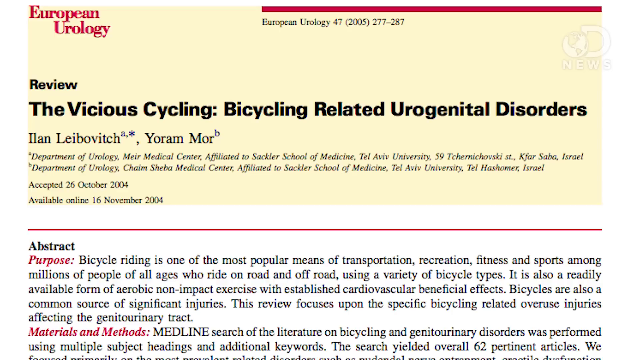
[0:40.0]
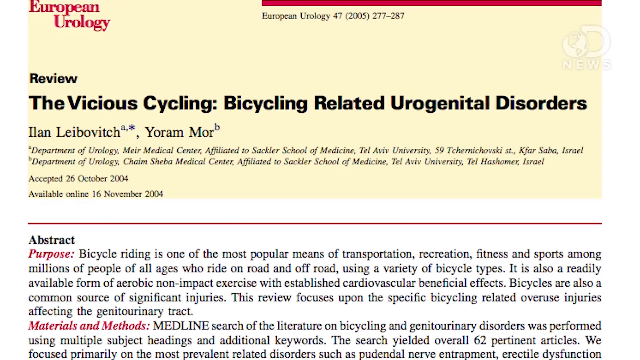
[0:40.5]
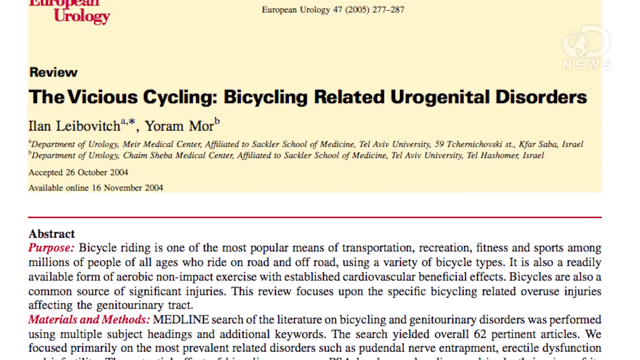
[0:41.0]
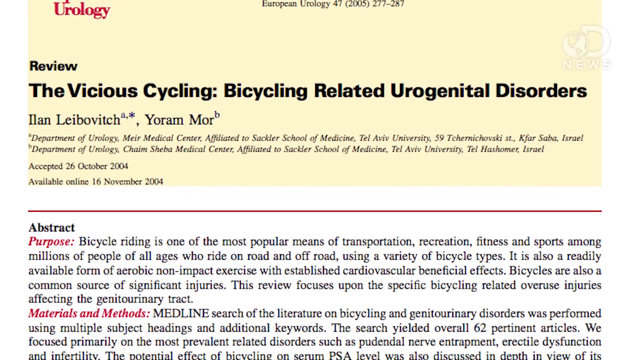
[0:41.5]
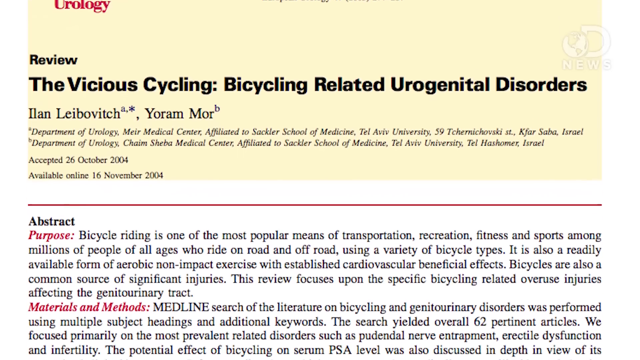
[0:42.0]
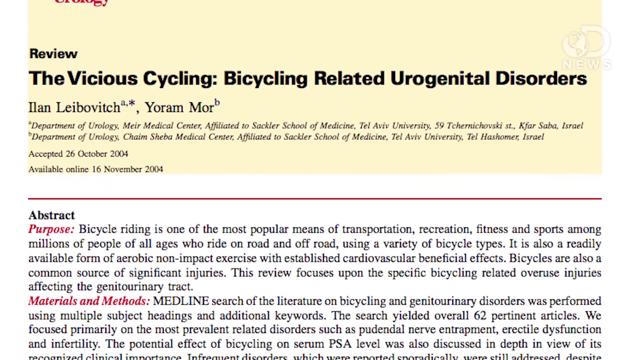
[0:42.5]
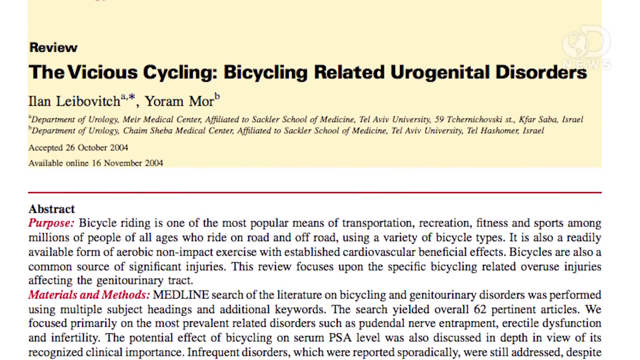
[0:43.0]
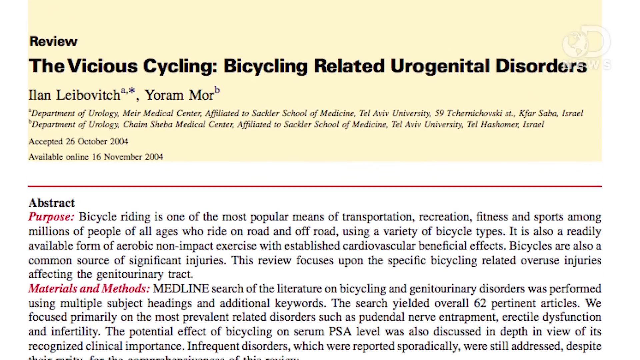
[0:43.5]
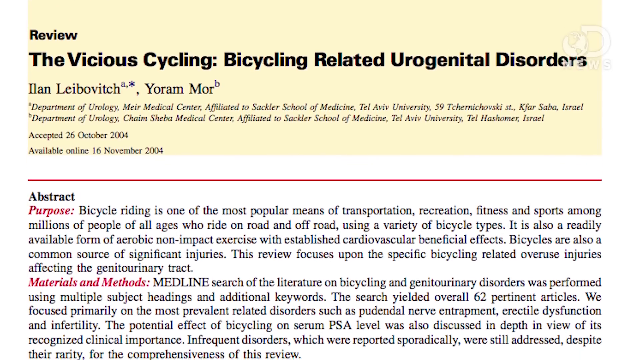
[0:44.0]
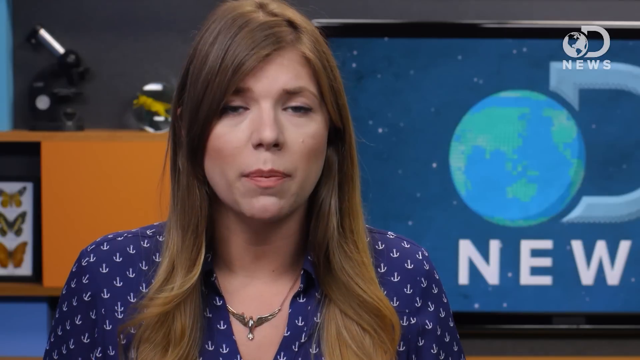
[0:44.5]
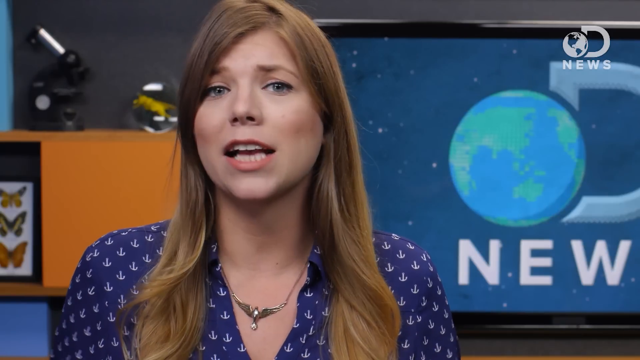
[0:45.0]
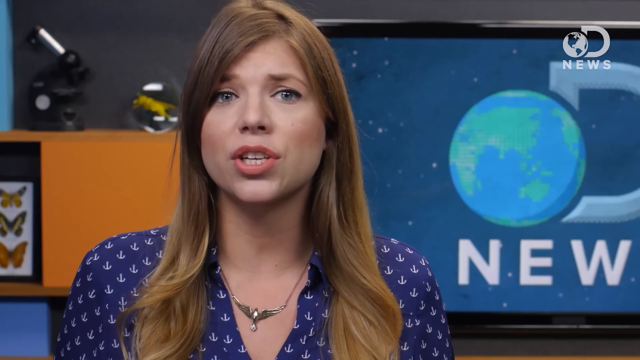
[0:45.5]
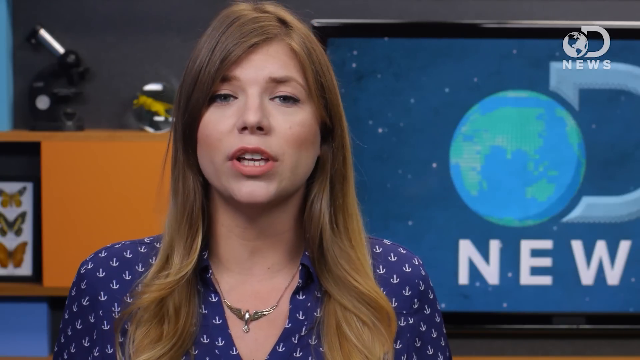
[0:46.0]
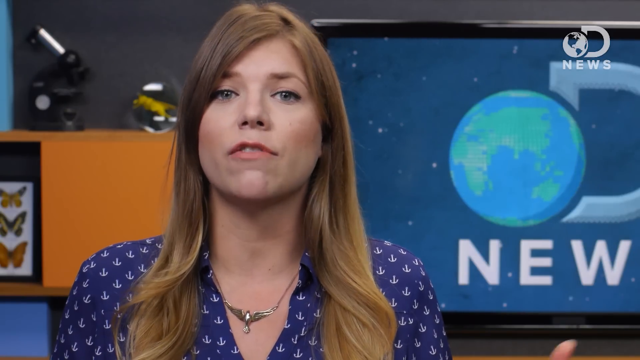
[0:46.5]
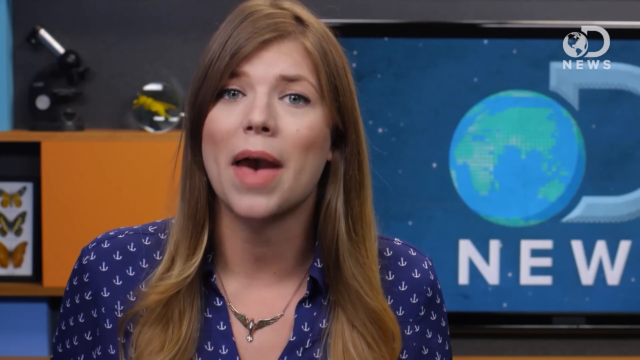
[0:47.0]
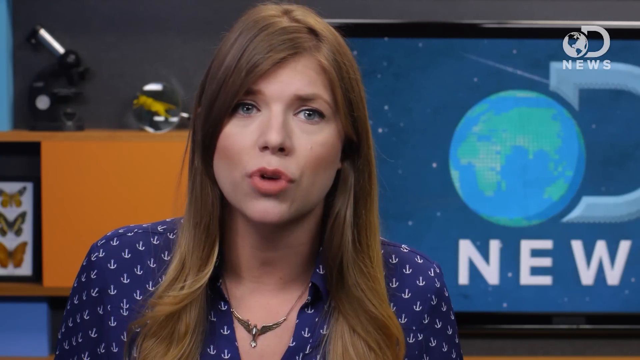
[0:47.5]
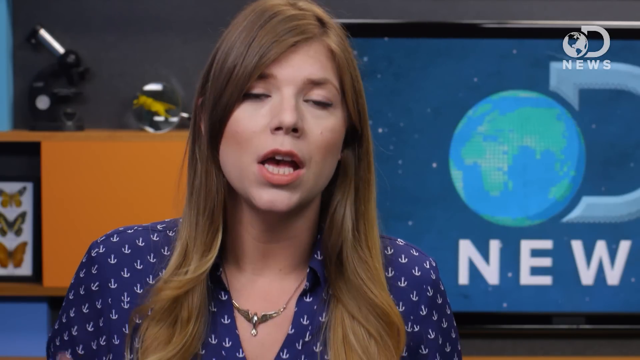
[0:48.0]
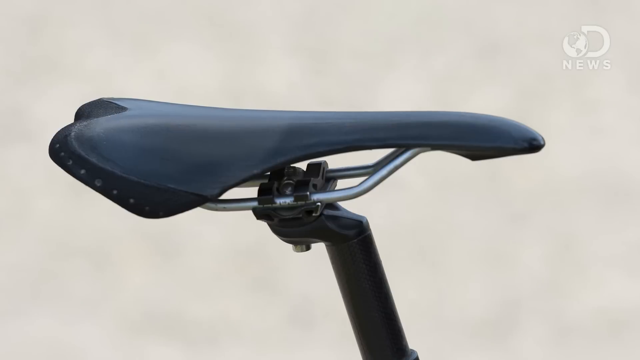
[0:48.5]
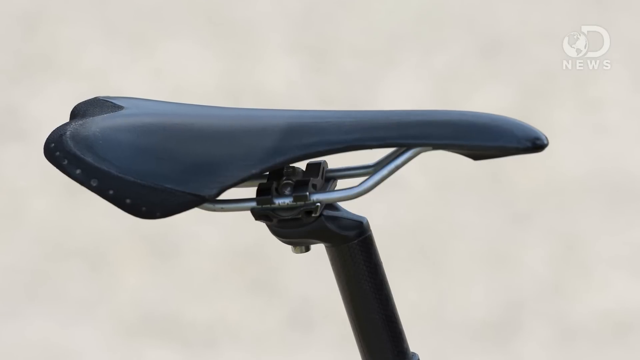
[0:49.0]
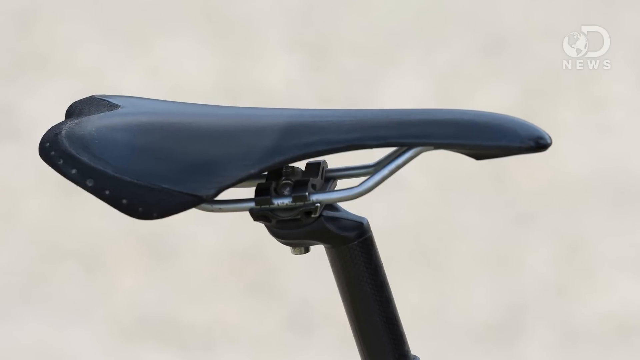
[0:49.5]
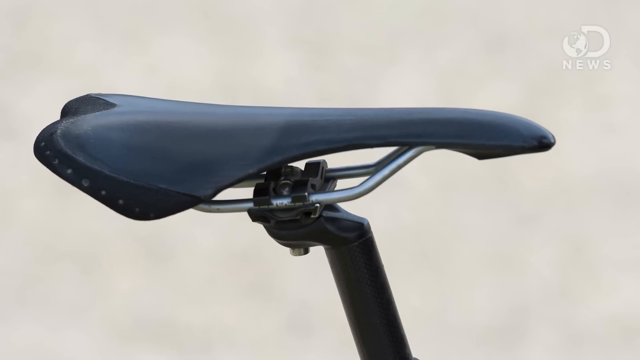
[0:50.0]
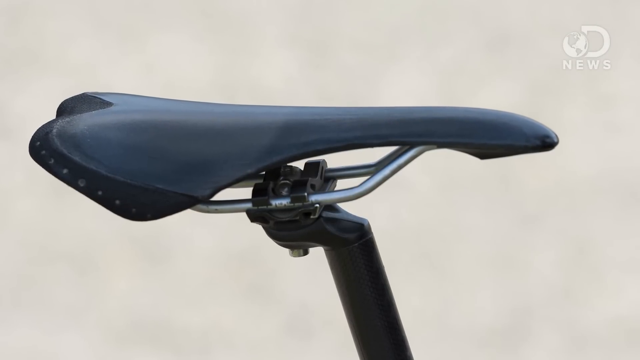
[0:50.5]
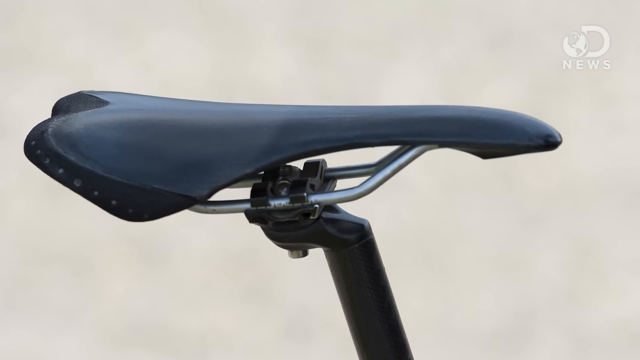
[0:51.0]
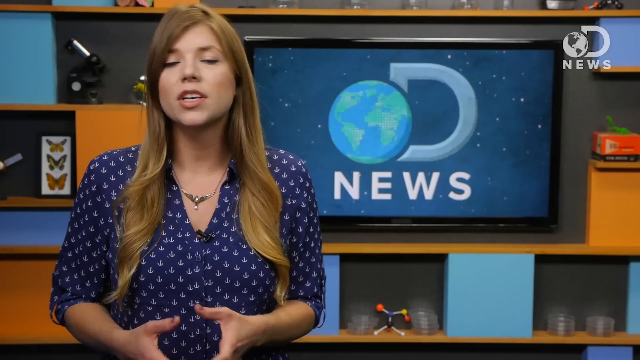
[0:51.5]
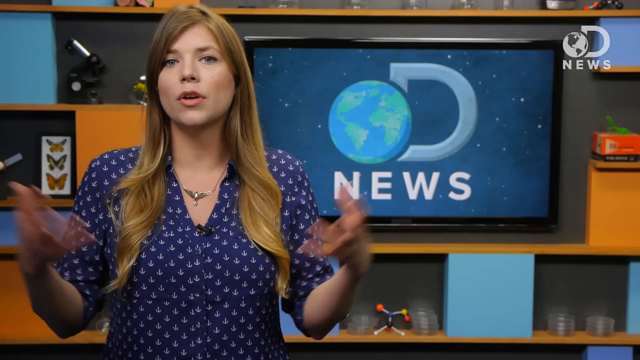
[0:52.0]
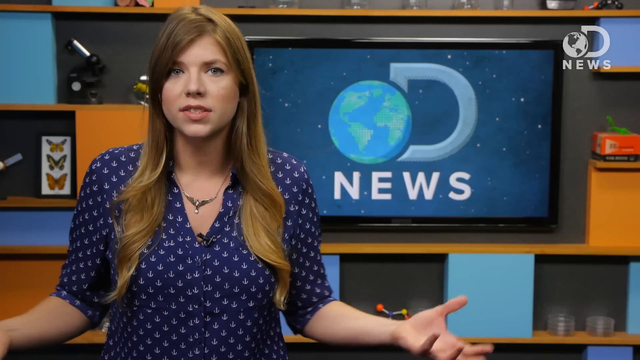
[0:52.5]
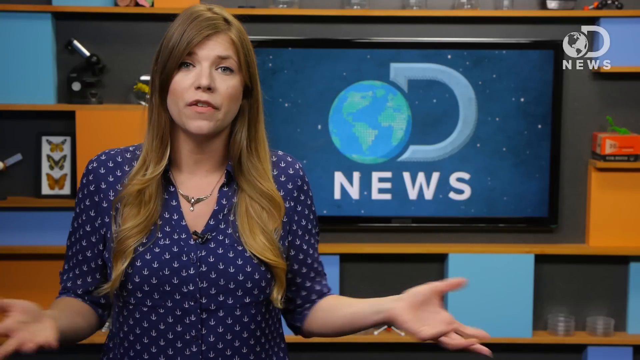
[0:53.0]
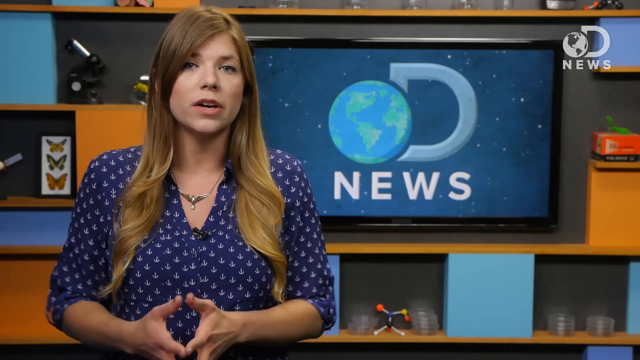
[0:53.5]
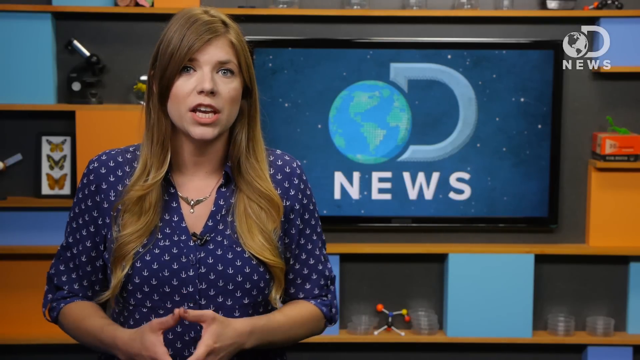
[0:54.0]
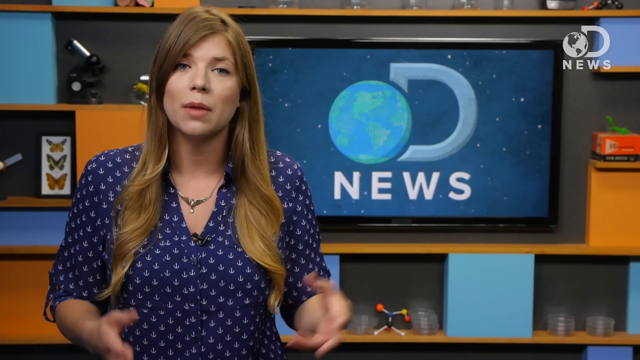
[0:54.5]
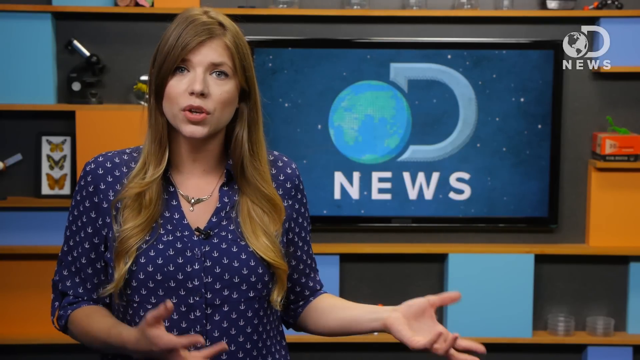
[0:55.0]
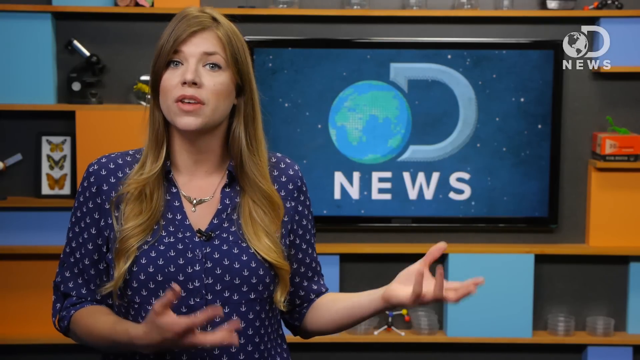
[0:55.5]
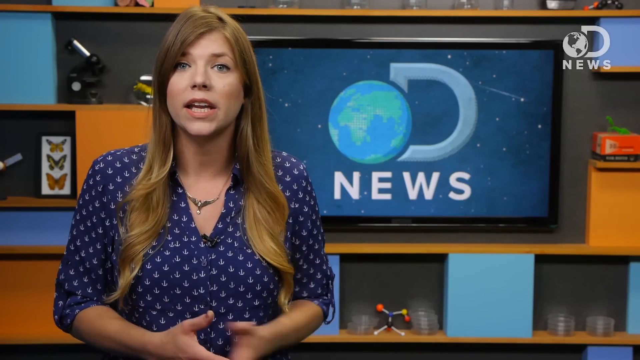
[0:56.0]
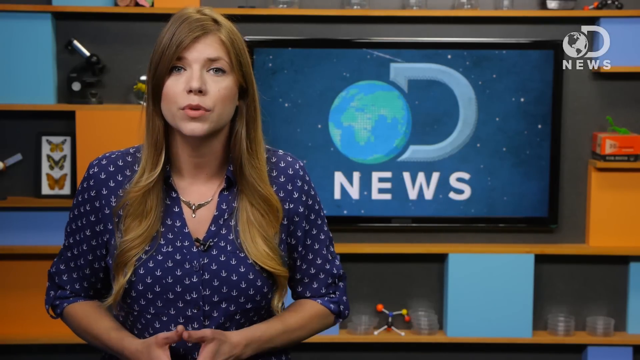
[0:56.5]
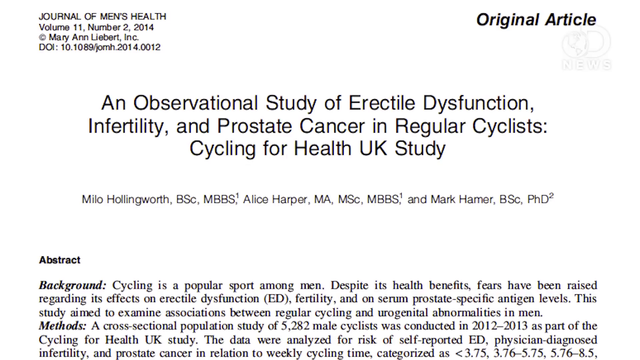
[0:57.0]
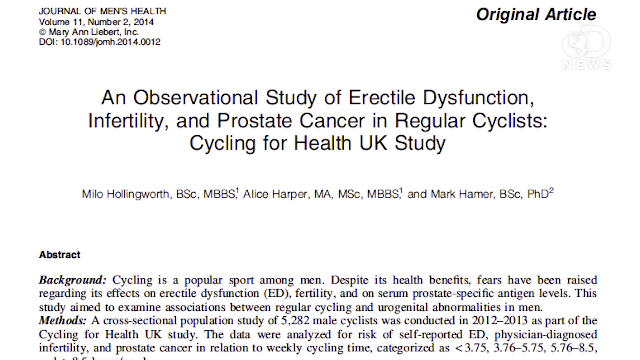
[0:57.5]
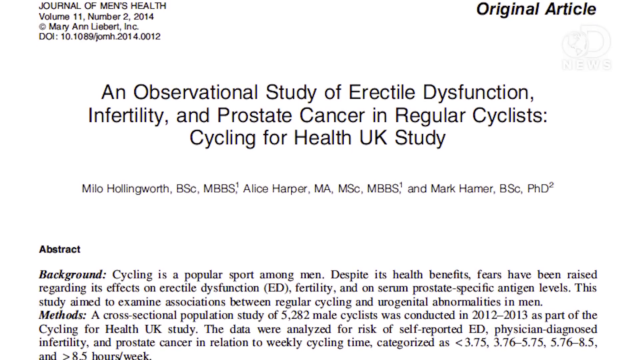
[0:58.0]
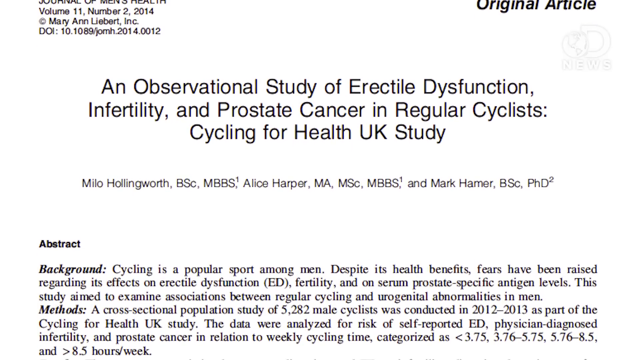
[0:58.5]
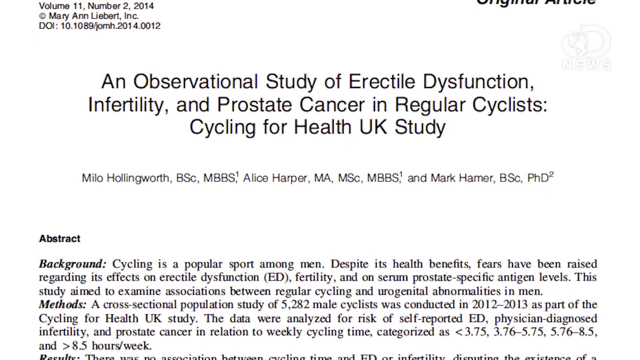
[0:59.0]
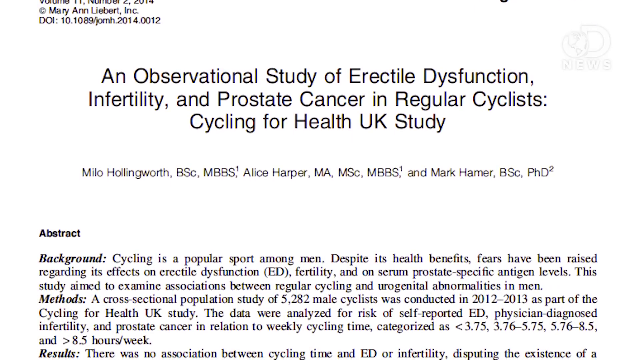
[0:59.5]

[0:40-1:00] The text of a review appears, including "Published 2005, 277-287", "Review", "The Vicious Cycling", "Bicycling Related to Urogenital Disorders", the names "Ian Labovitch, Yoram Moore", "Department of Urology", "Accepted 26 October 2004", "Available online 16 November 2004", and an abstract beginning "Purpose: Bicycle riding is one of the most popular means of transportation, recreation, fitness, and sports among millions of people of all ages who ride on road and off road. Using a variety of bicycle types, it is also a readily available form of aerobic non-impact exercise with established cardiovascular beneficial effects. Bicycles are also a common source of significant injuries. This review focuses upon the specific bicycling-related overuse injuries affecting the genitourinary tract." The video transitions back to the woman talking in the studio, who waves her hands, and then another text appears: an "original article", an observational study of erectile dysfunction, infertility and prostate cancer "in regular cyclists", the "cycling for health UK study".